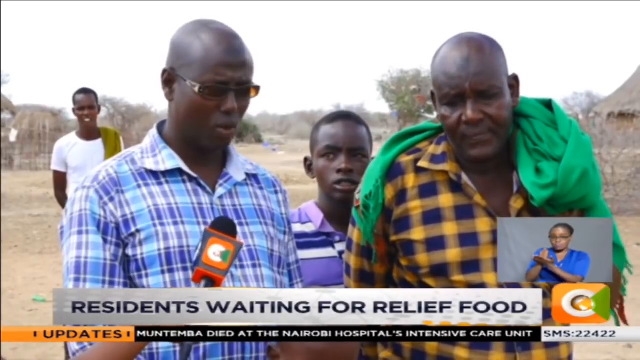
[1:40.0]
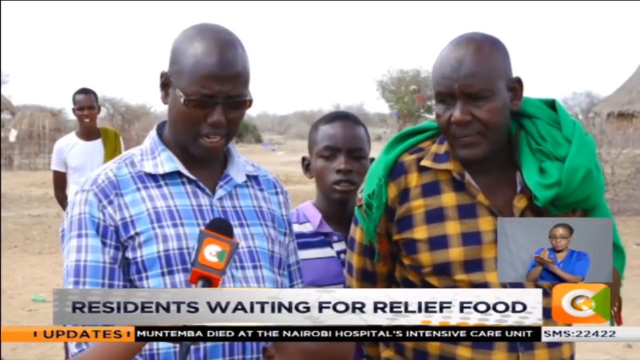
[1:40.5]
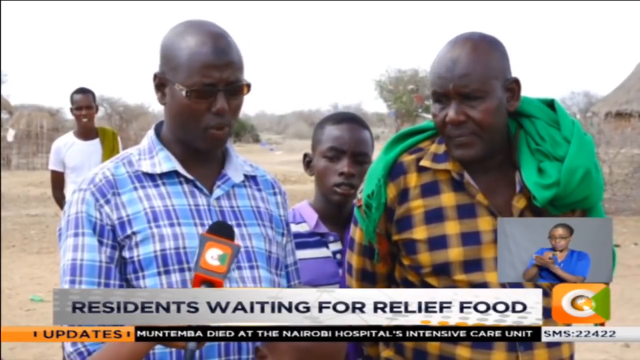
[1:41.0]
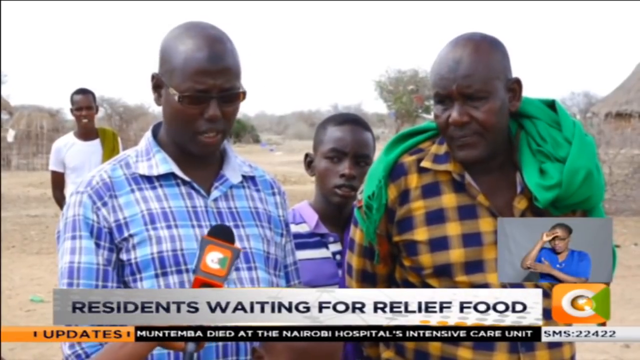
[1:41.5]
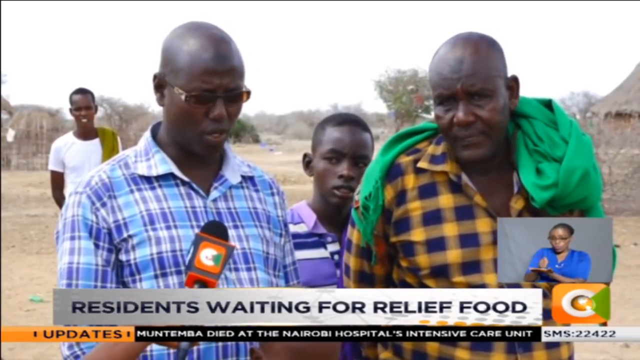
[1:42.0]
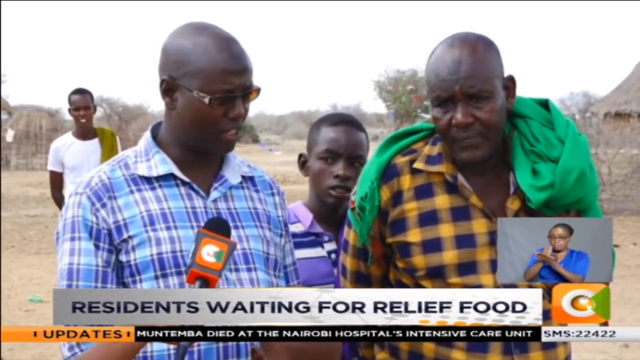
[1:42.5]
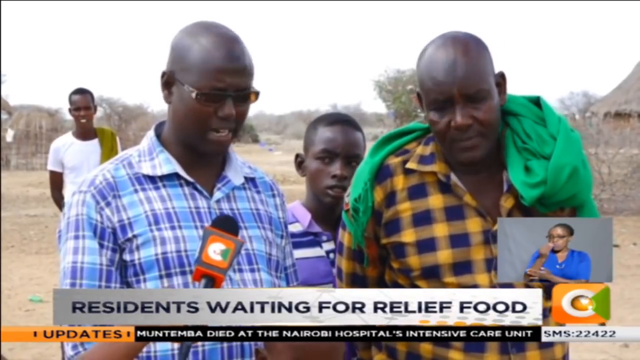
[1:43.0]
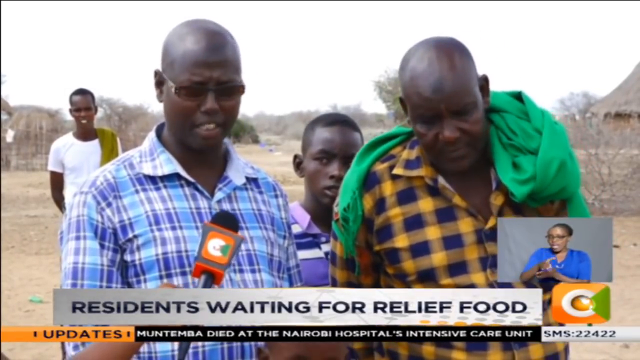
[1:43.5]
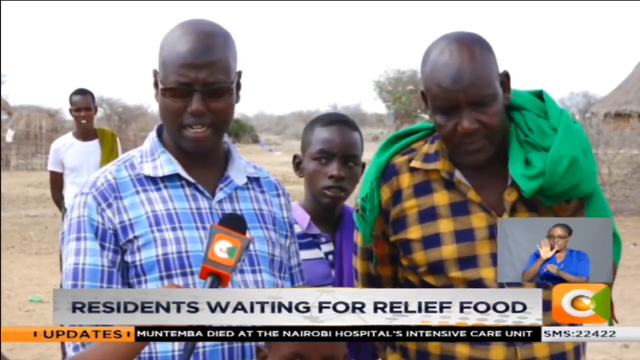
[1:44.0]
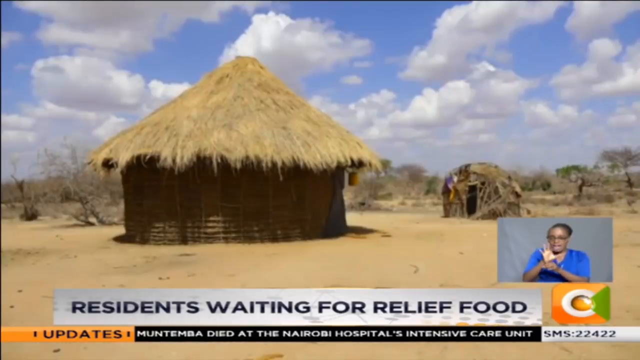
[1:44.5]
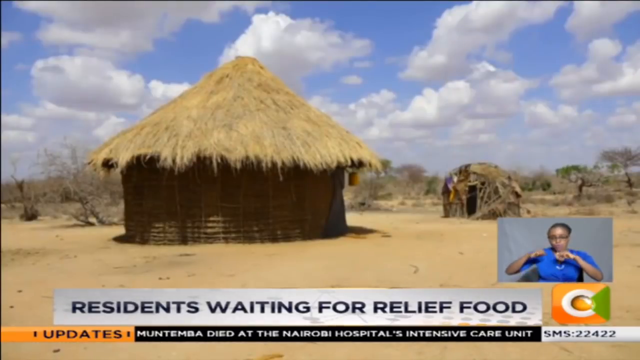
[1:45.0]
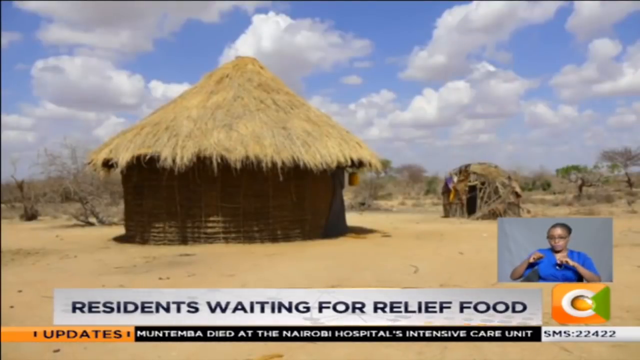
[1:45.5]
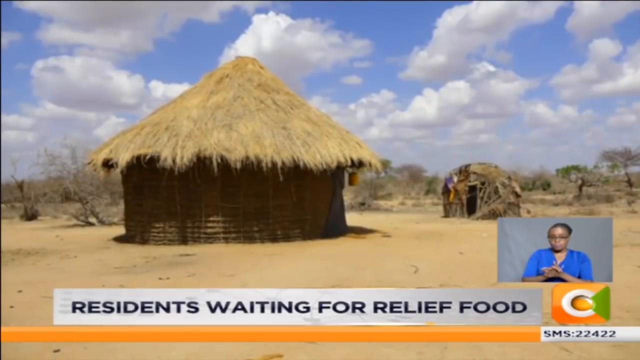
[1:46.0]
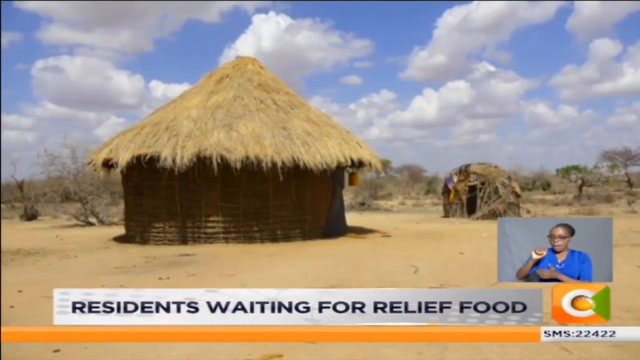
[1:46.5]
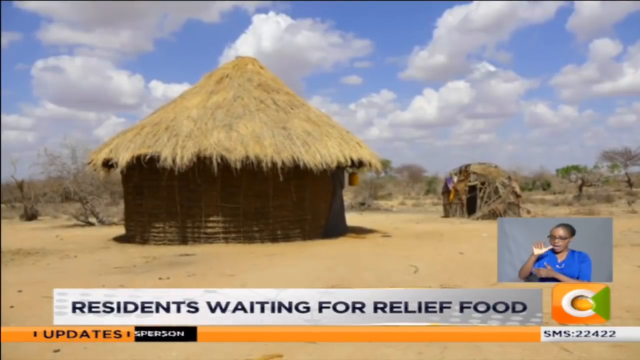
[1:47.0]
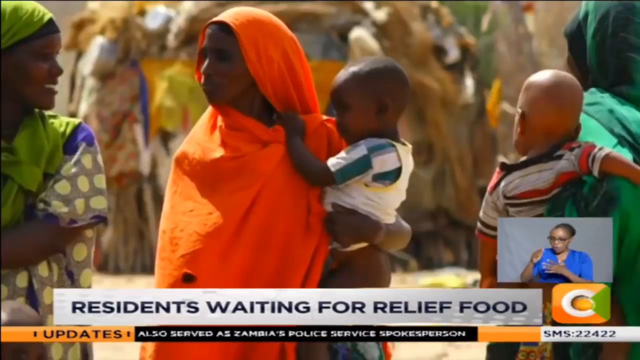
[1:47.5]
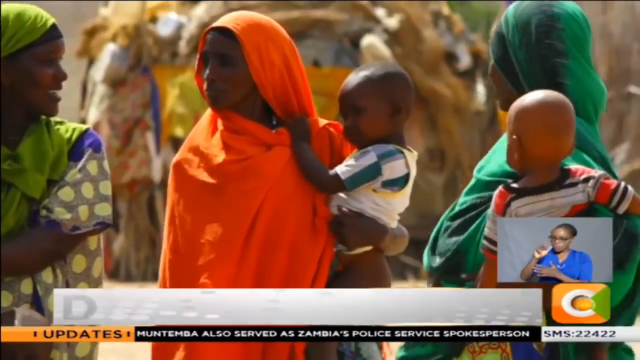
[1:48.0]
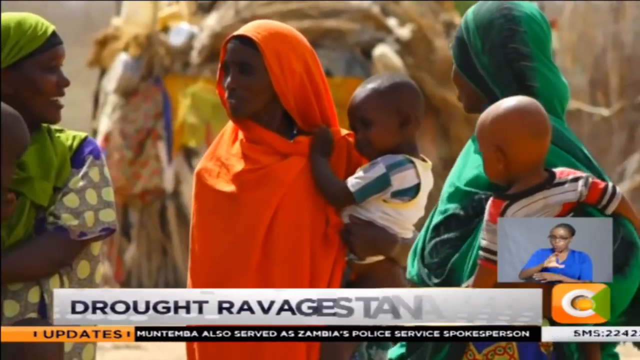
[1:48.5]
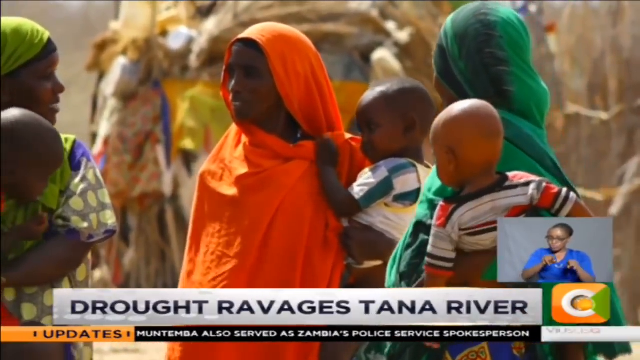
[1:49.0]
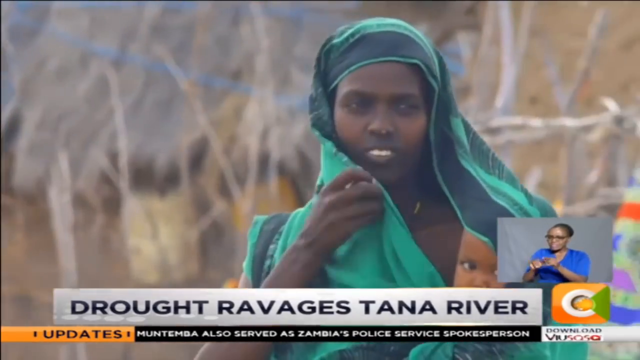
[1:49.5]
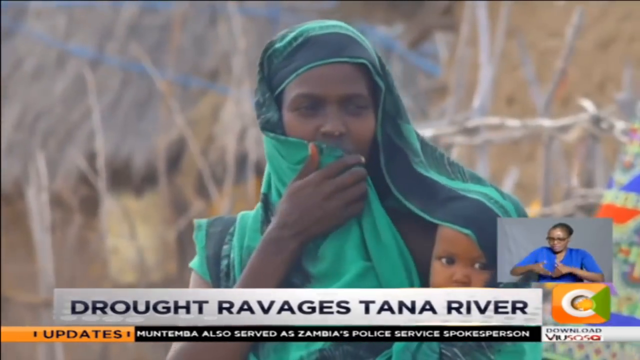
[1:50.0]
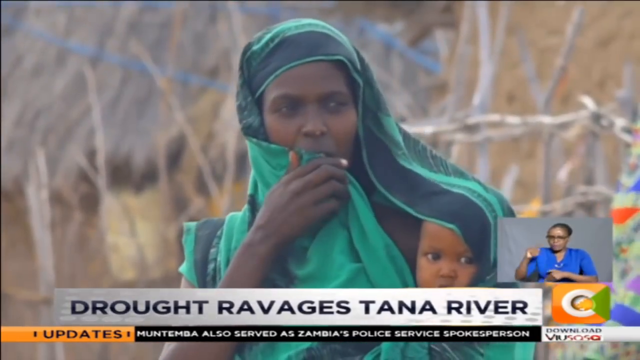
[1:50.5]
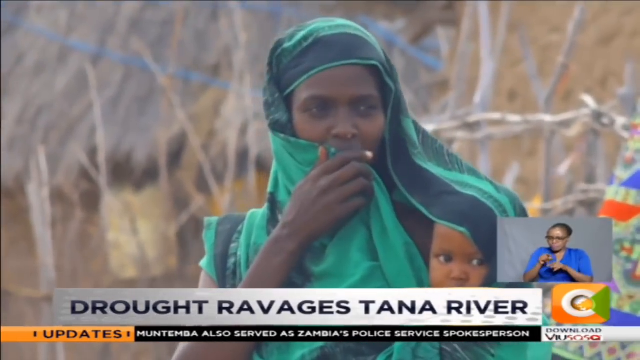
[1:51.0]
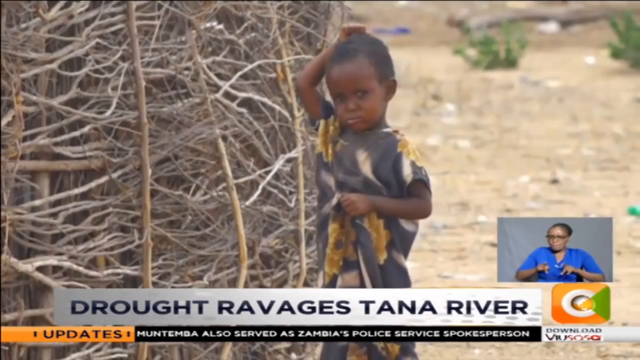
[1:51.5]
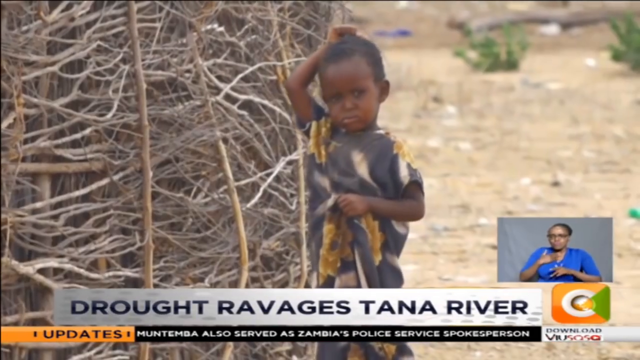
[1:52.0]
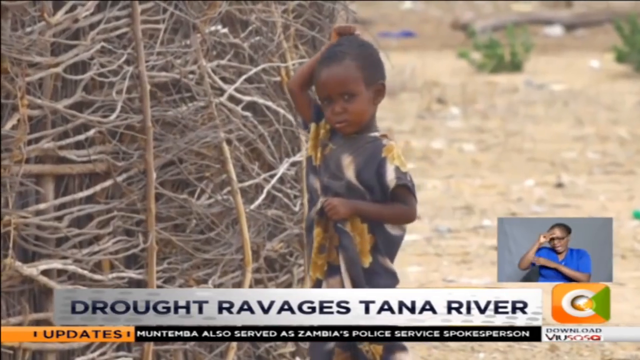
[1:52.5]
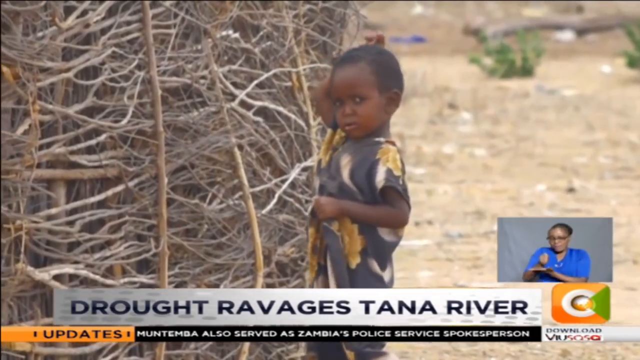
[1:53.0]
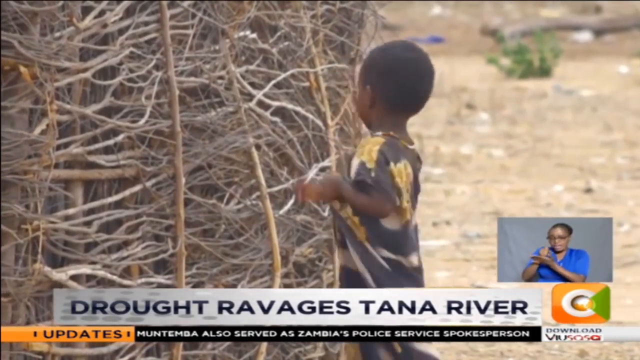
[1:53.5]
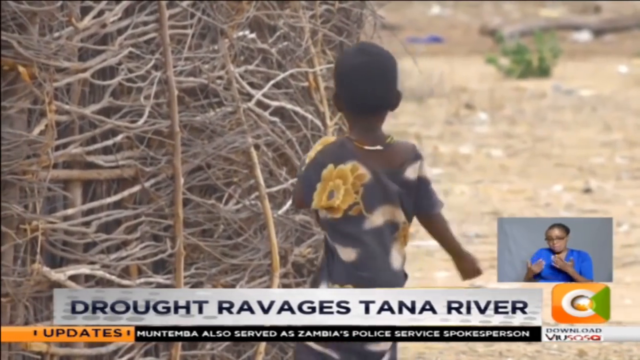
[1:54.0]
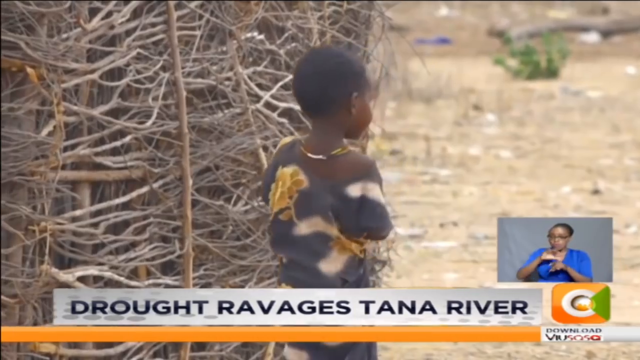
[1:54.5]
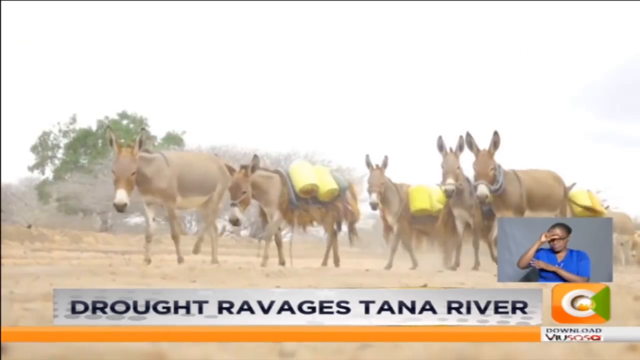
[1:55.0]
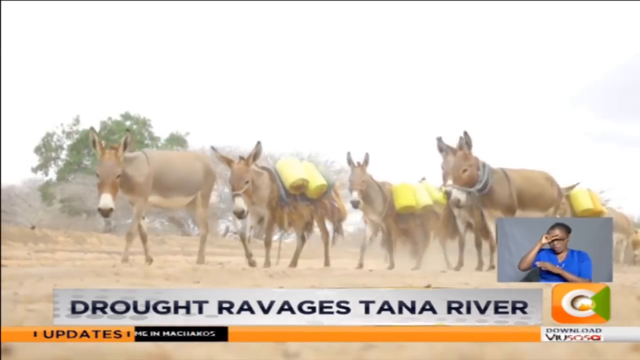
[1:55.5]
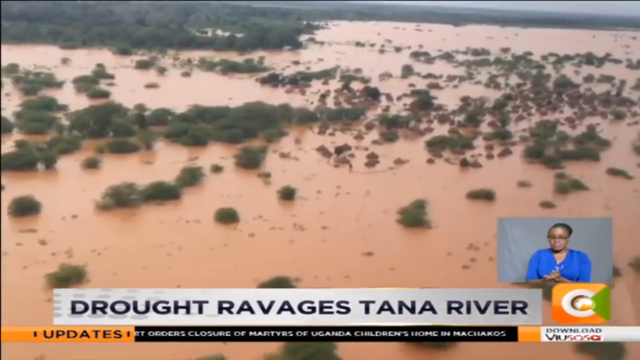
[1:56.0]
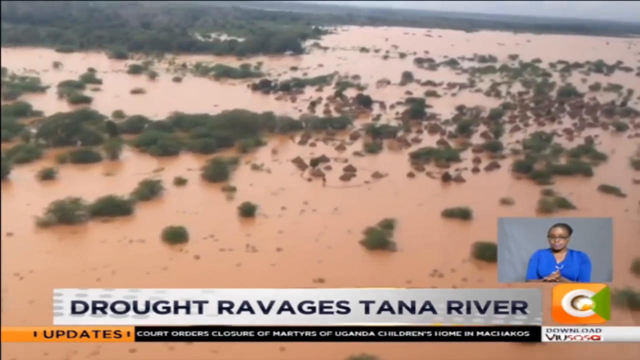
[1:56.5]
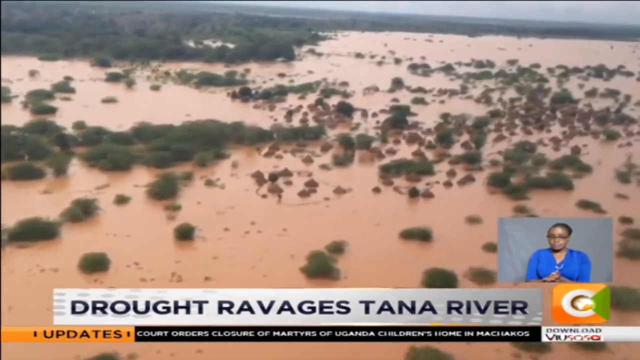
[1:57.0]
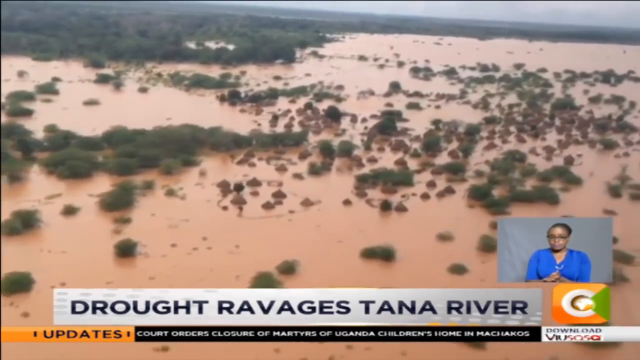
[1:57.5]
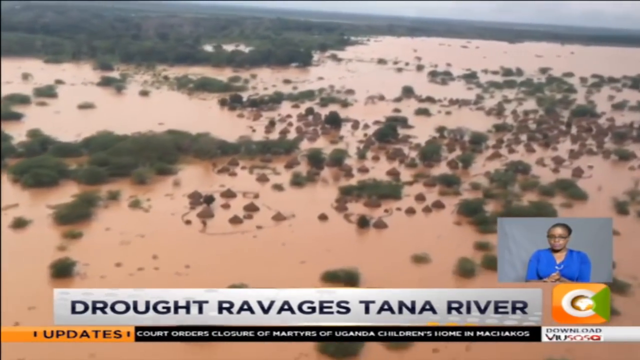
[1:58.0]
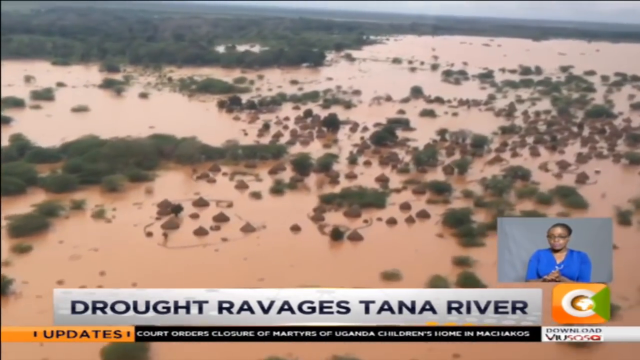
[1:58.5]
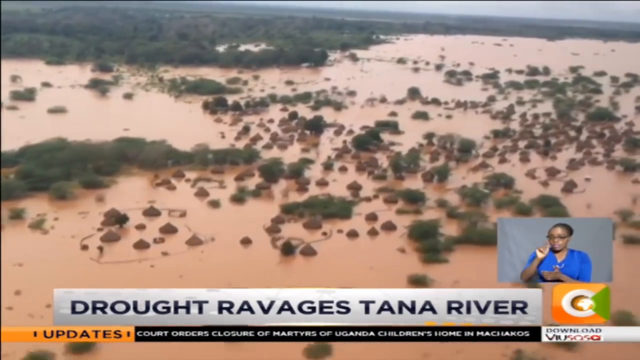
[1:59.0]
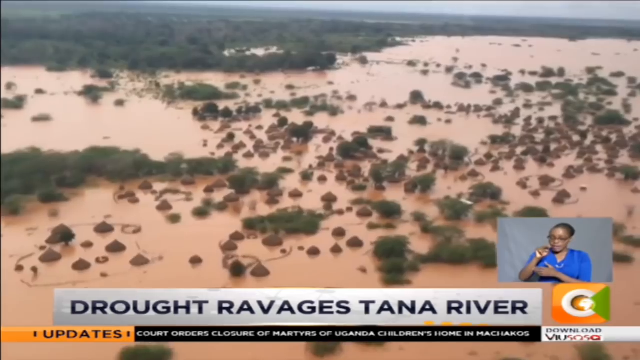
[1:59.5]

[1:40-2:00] The man in the blue plaid shirt is still being interviewed and speaking. The older man on the right, in the yellow plaid shirt with a green jacket or some type of shirt wrapped around the top, seems to agree with what he says, as if everything is difficult right now. The video pans to a hut out in the middle of the desert, with a straw- or hay-like substance on top and some type of outhouse or something toward the right. The title still reads "residents waiting for relief food" in black lettering. Several women with their babies are standing around, with the text "drought ravages Tanna River" in black lettering. Then the camera pans across various donkeys, followed by a helicopter view of a region that looks flooded, with water everywhere.